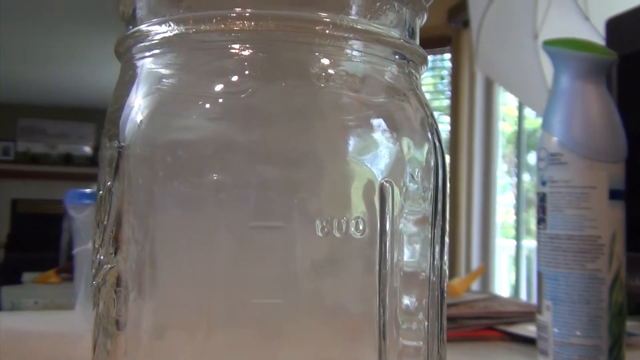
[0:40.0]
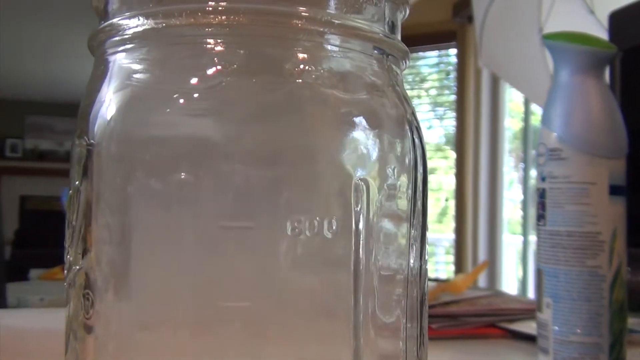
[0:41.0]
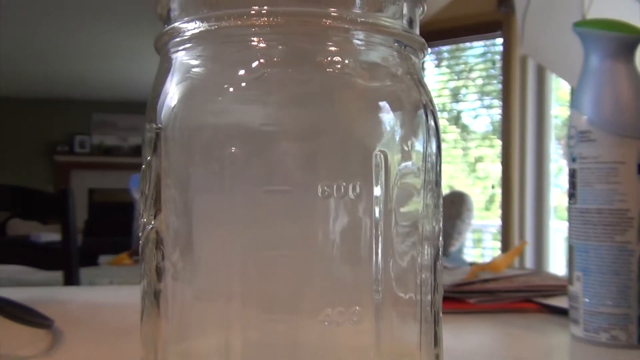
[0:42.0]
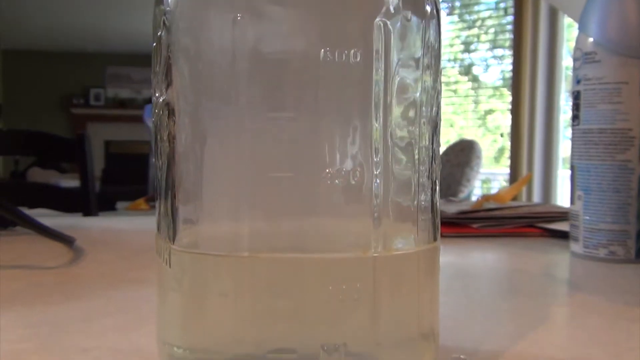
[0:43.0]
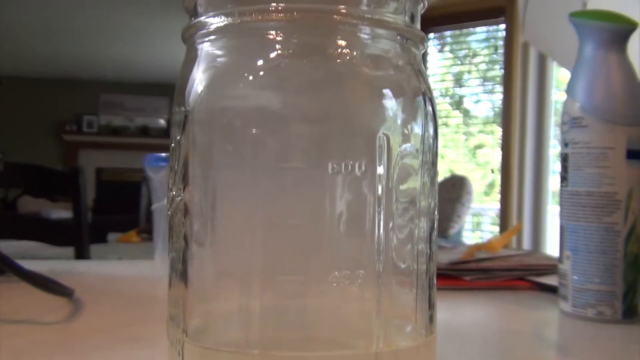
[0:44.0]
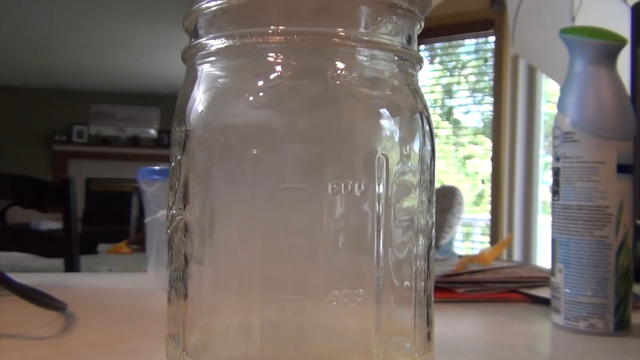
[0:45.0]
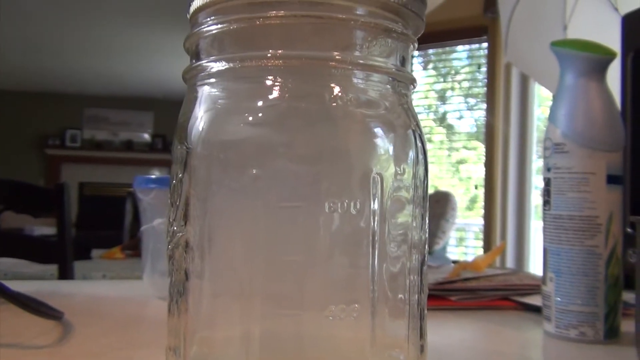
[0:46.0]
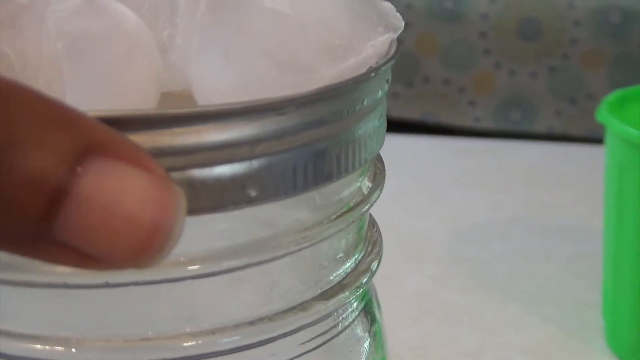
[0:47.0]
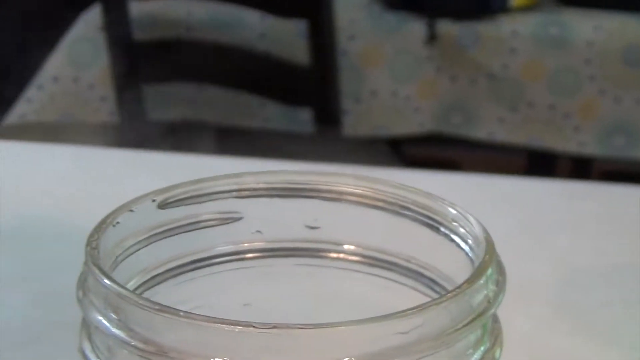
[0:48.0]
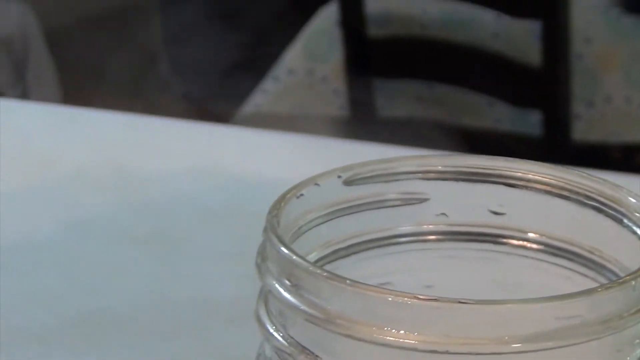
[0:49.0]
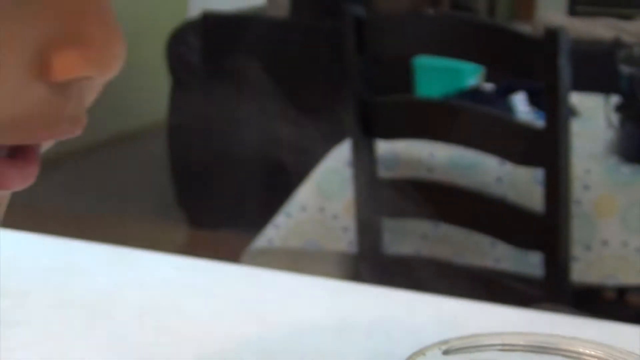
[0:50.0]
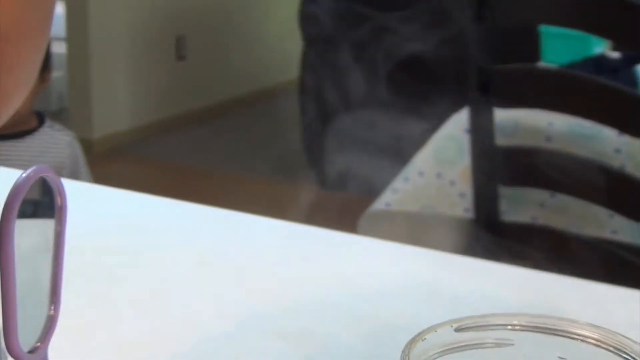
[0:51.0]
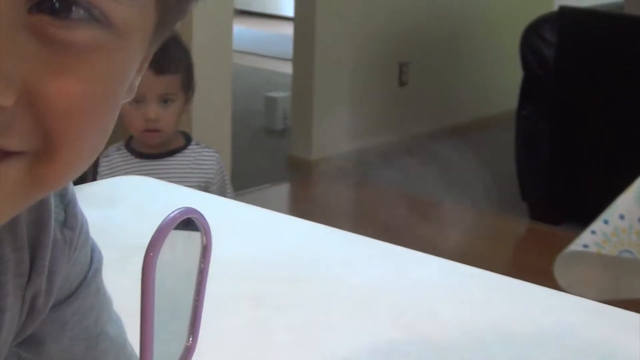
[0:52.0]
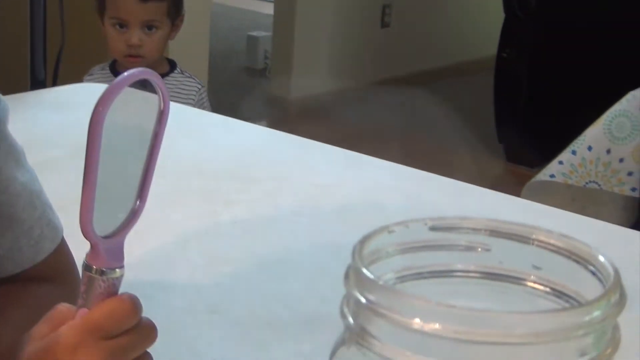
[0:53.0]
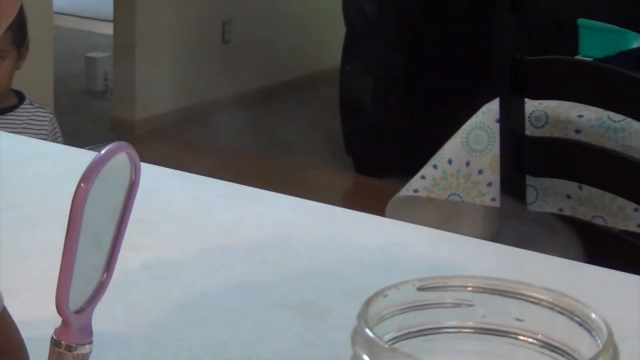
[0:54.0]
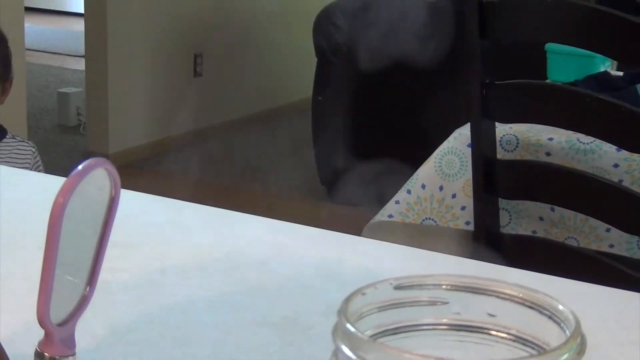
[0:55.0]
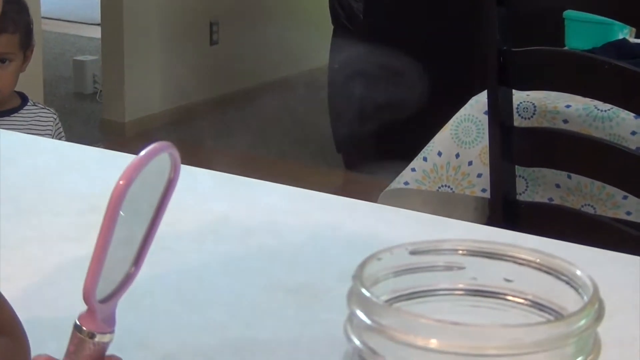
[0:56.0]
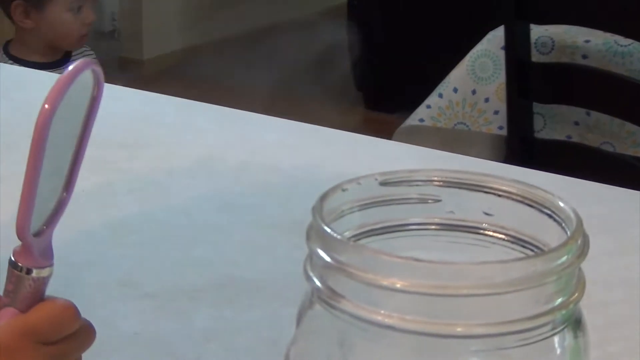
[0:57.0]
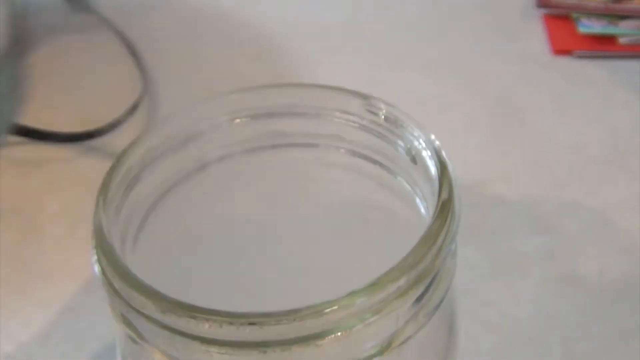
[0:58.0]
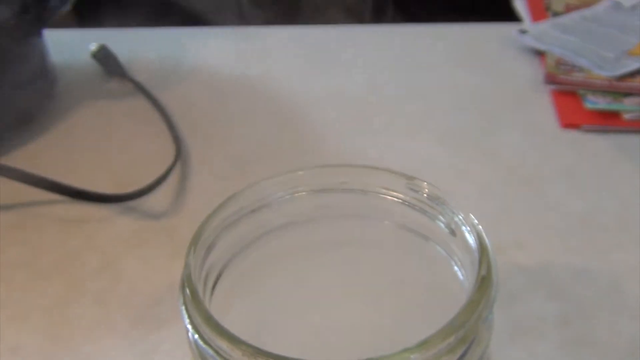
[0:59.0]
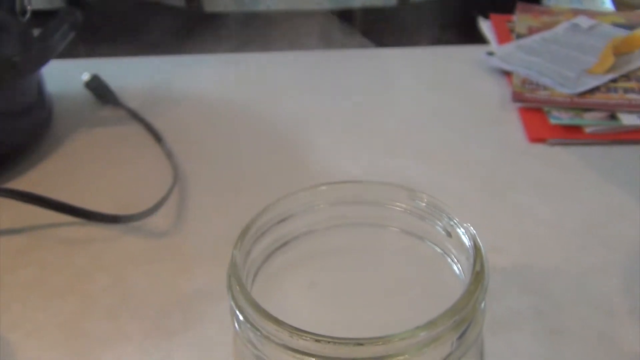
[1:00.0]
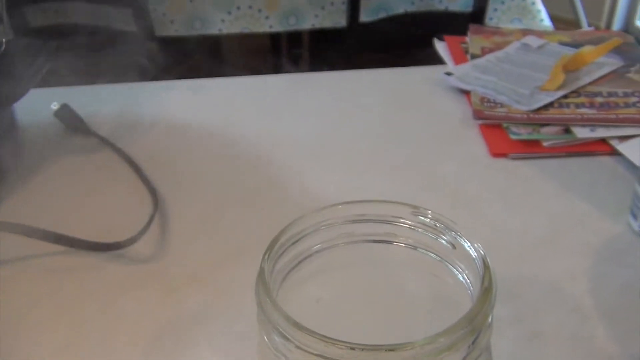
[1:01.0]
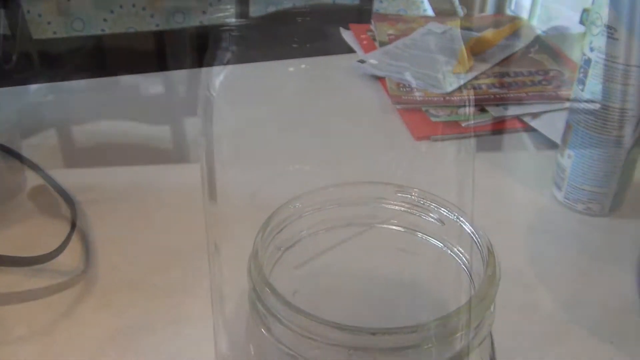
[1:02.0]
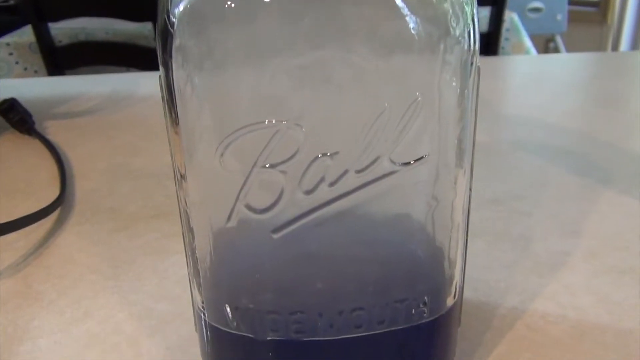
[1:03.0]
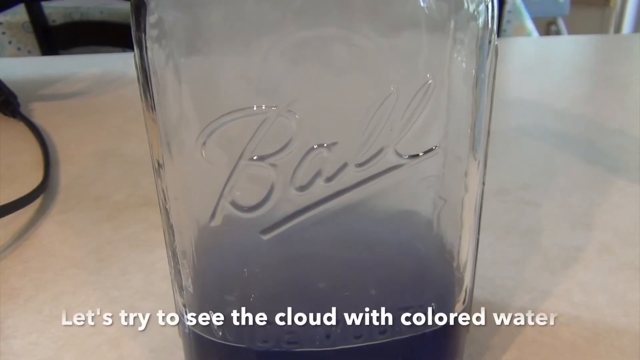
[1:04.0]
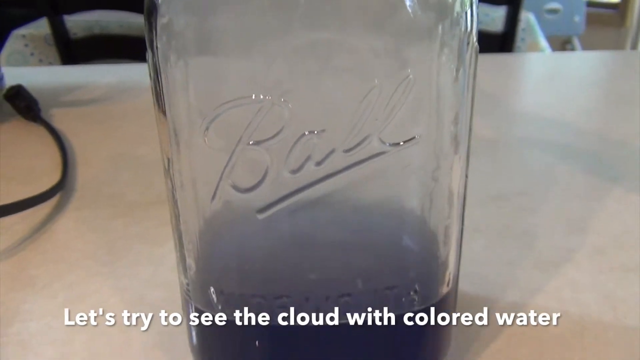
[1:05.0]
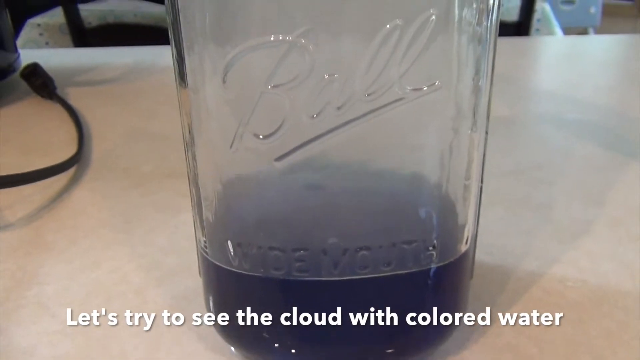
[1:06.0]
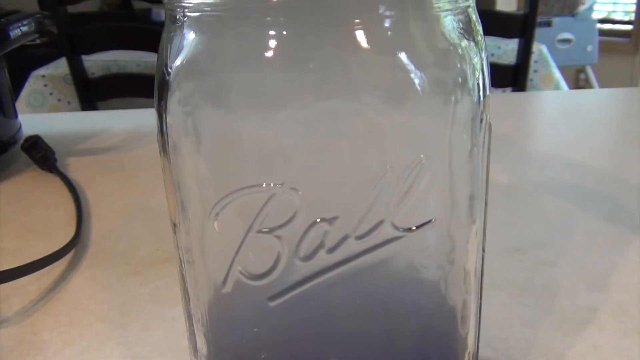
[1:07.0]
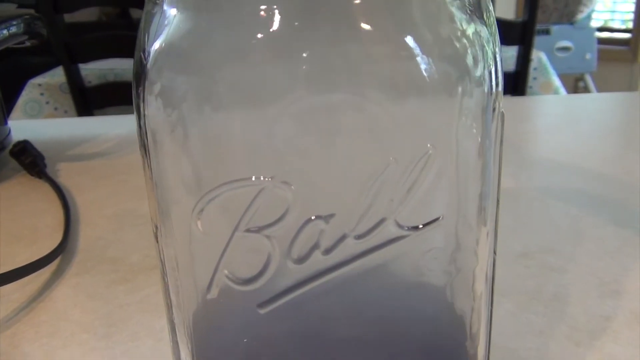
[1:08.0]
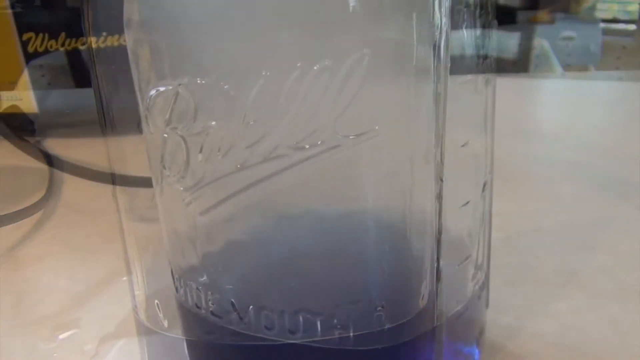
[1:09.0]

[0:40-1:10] From another angle, the camera pans down to the bottom of the jar and back up; there are numbers on the side of the jar. The girl takes the lid off, exposing the opening, and condensation or a mist comes out of the jar. The boy takes a sniff and looks visibly happy. He holds up a small, quite narrow pink glass mirror next to the opening of the jar as the mist comes out. Another kid, a toddler, is in the back watching the whole thing.